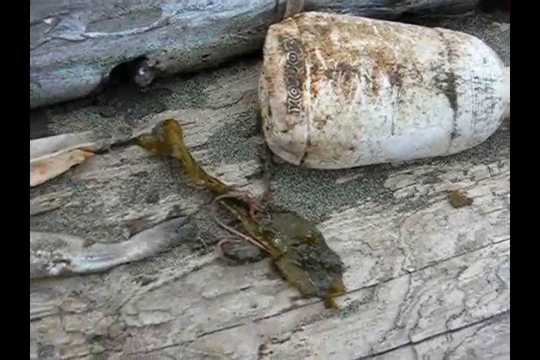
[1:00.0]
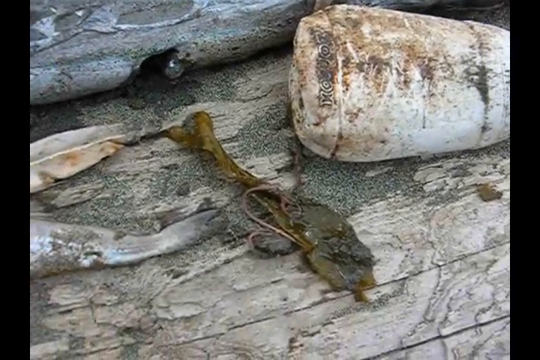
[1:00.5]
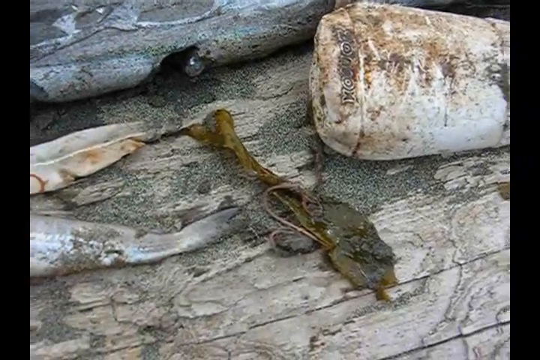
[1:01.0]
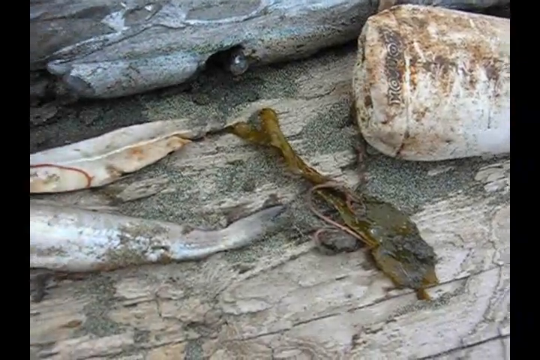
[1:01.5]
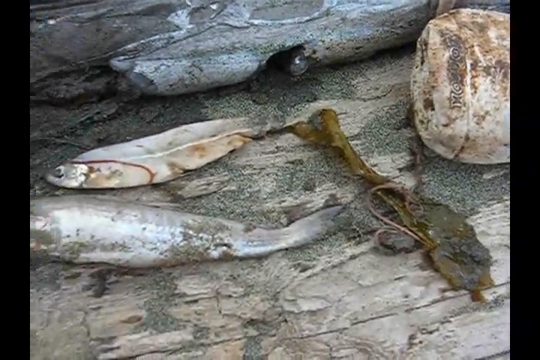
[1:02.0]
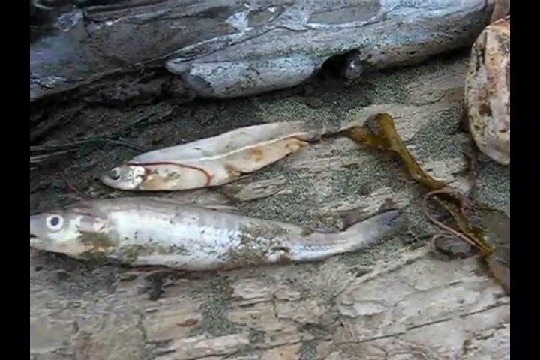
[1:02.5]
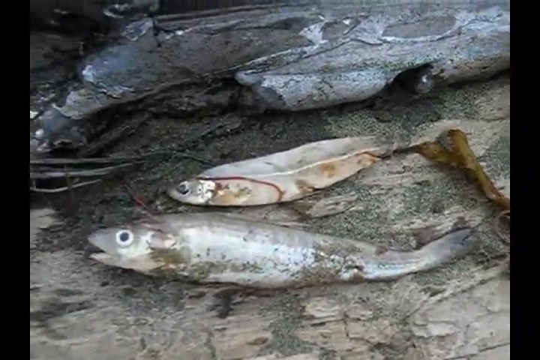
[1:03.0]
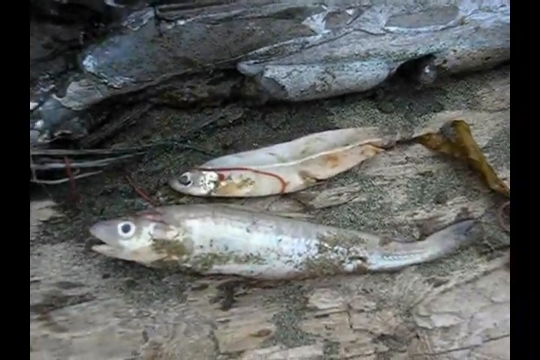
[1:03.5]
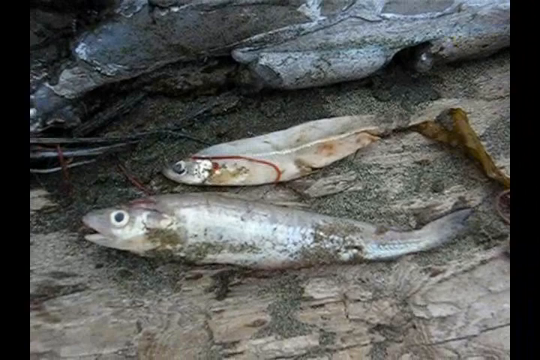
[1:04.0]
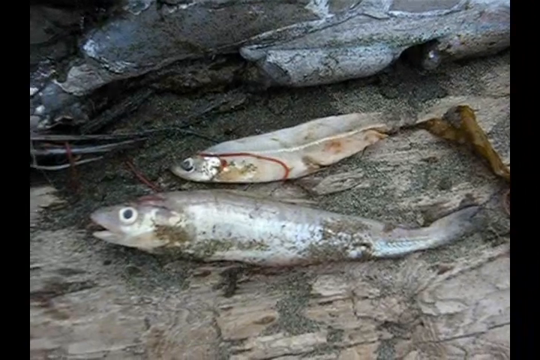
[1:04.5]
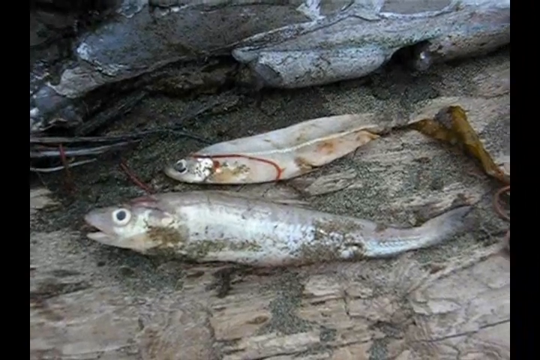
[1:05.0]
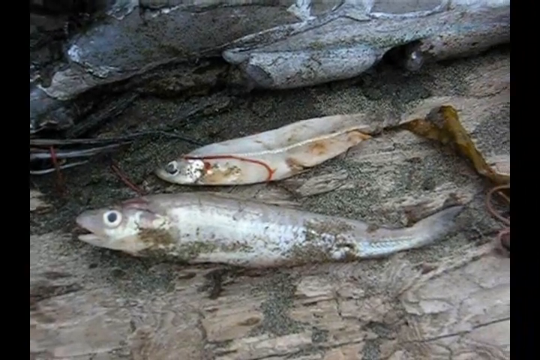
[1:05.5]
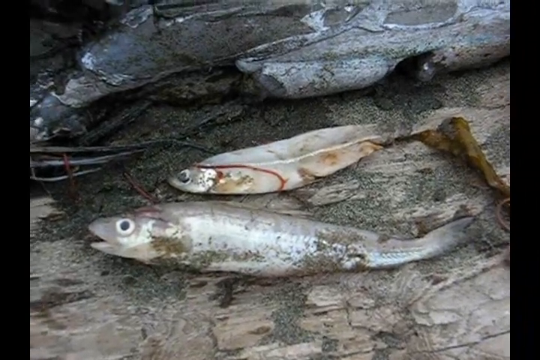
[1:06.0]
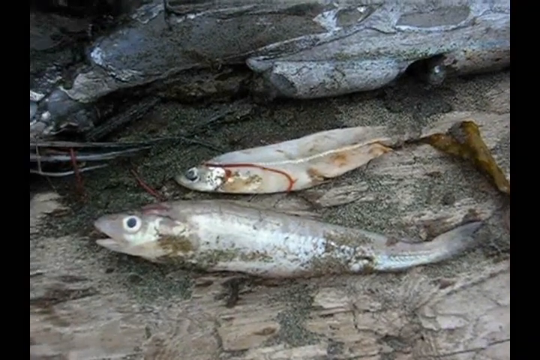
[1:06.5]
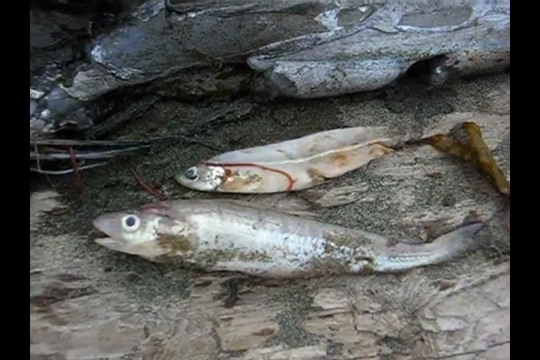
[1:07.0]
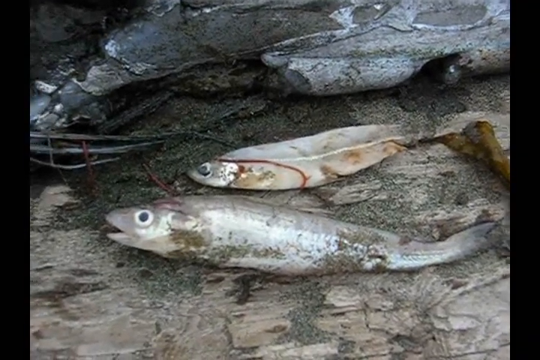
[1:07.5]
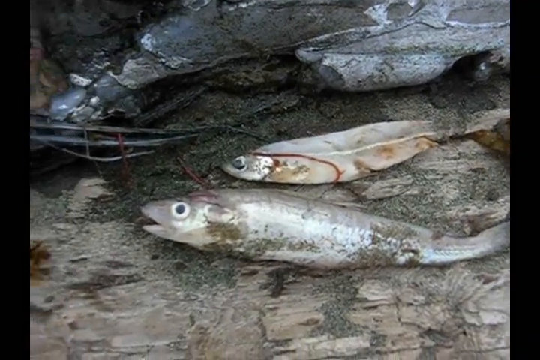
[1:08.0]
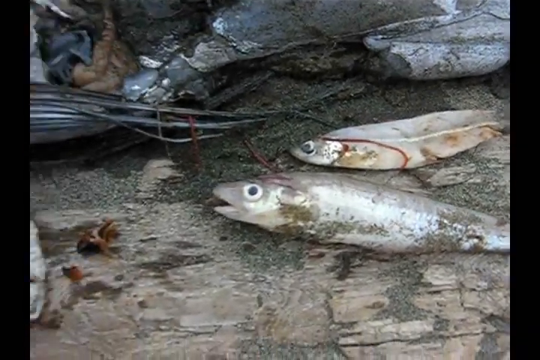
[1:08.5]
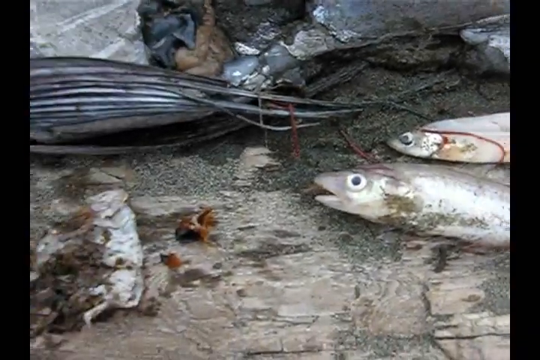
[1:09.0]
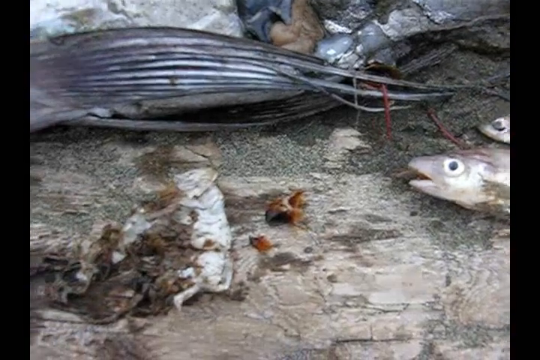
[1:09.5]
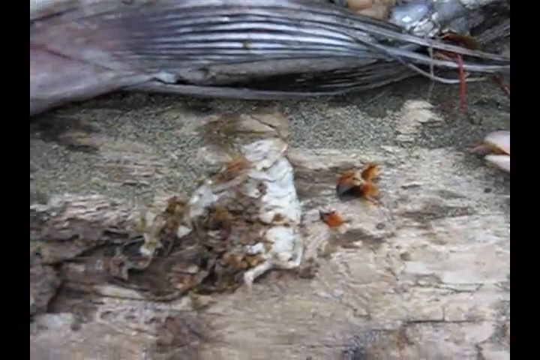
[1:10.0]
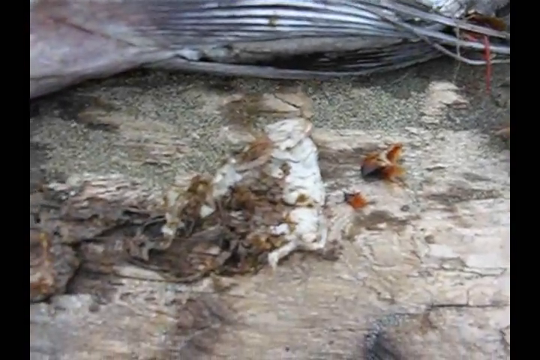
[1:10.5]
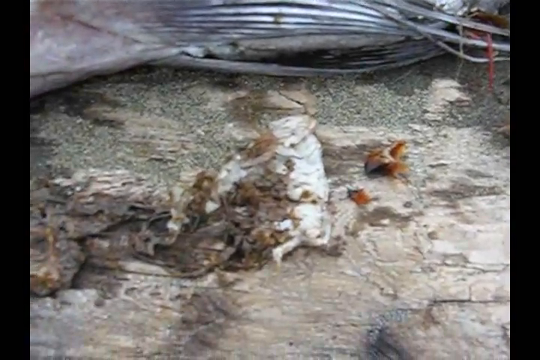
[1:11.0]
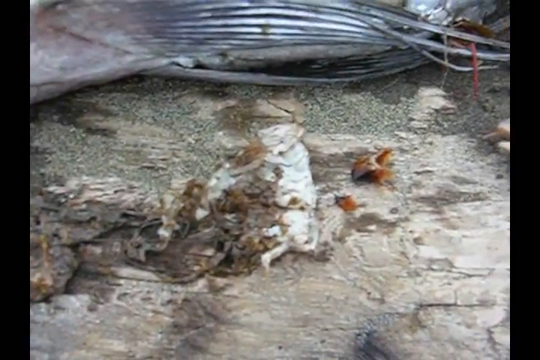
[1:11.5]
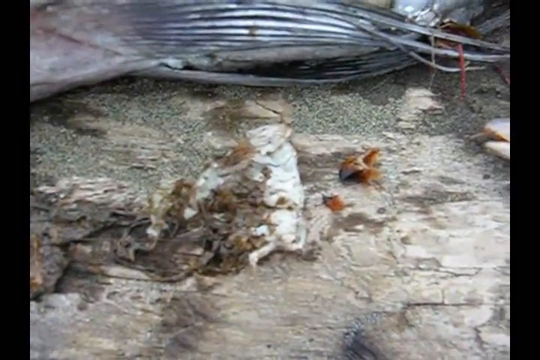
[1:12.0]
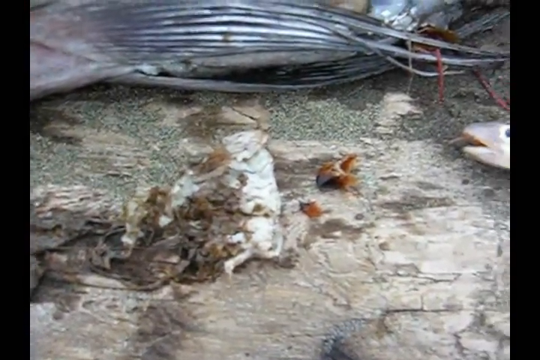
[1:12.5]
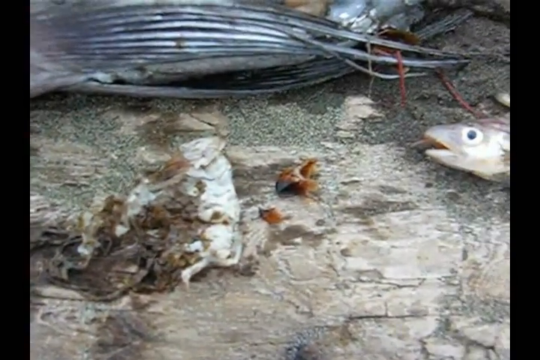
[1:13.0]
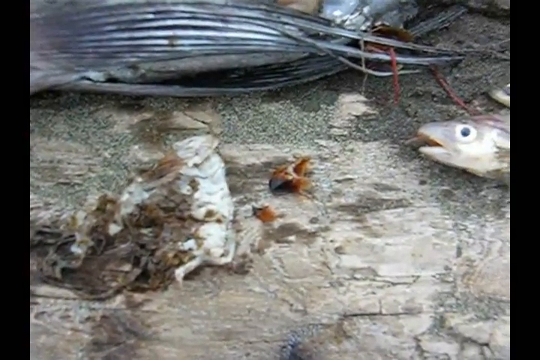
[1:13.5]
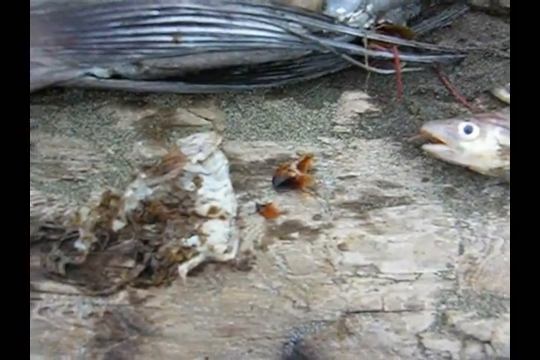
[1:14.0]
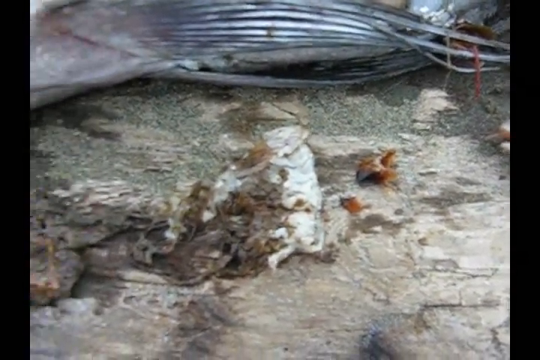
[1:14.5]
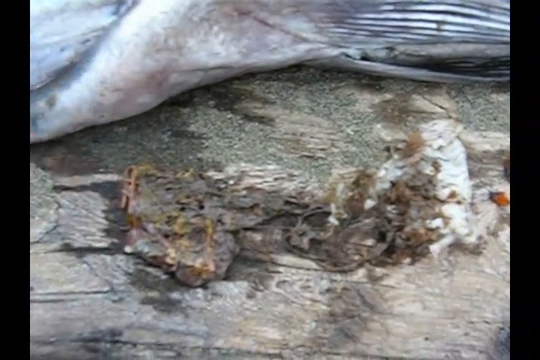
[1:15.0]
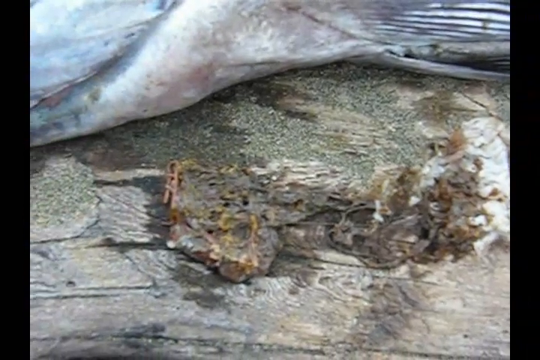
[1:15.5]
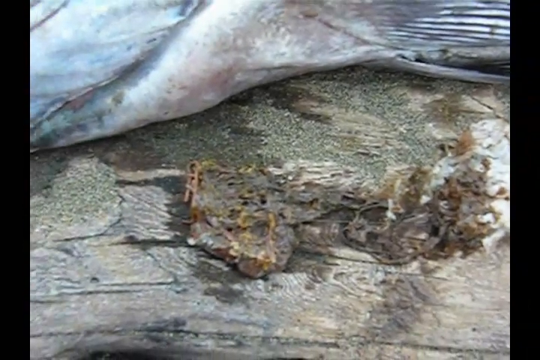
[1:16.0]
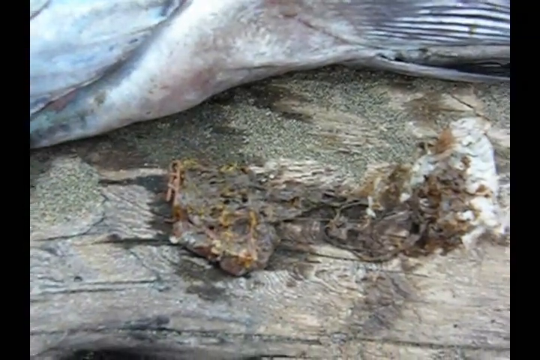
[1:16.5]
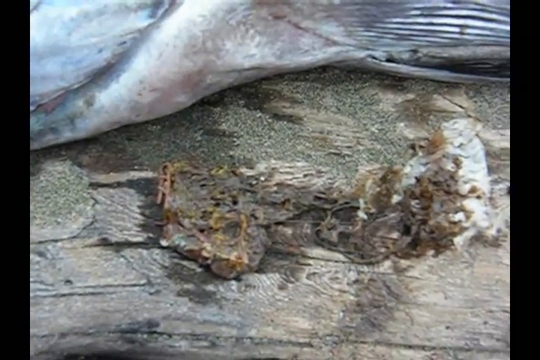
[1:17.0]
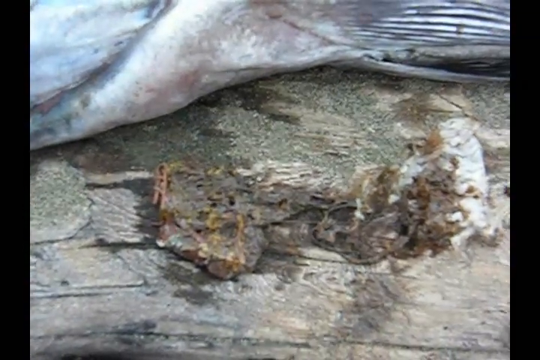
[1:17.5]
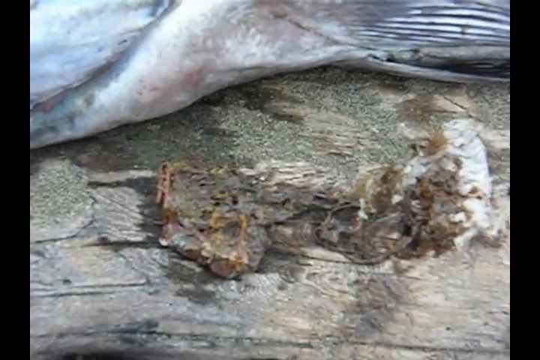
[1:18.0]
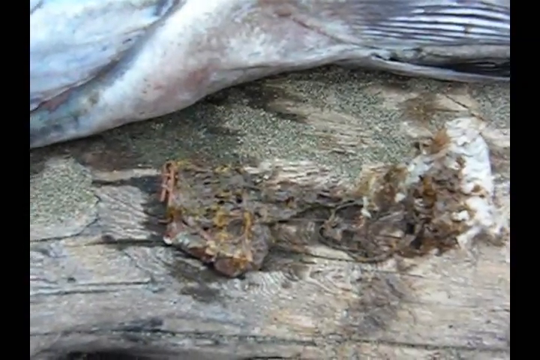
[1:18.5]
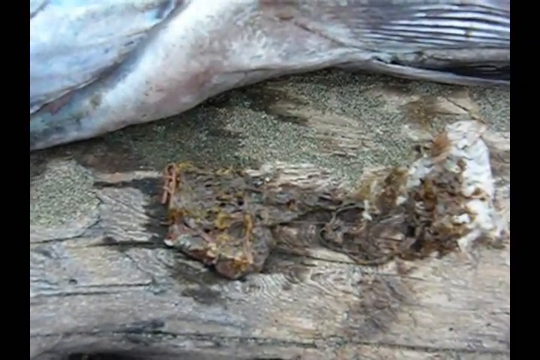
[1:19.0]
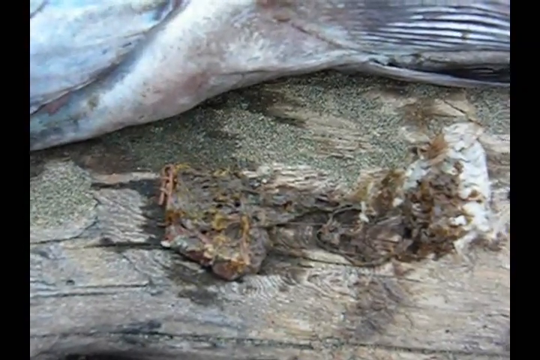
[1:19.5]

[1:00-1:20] The shot shows what seems to be a dirty white bottle and a green leaf on top of a wooden log covered in sand on the beach. Both have grime on them, and the bottle has text on it that cannot be read because of the video quality and the dirt obscuring the letters. The camera pans across them and then to two smaller deceased fish, both gray with very large eyeballs. The fish stay perfectly still and seem to be staring at something. One of the fish has a red line around it that looks like it could be a fishing line or some sort of artery or vein. The camera stays on the fish for some time, then pans further to the left, where there looks to be some sort of structure growing within the log itself. Because of the poor video quality it is unclear what it is, but it seems to be white with many different parts. Something on top of it looks to be another fish, but it is very unclear. The camera focuses on this large piece of unidentified material.